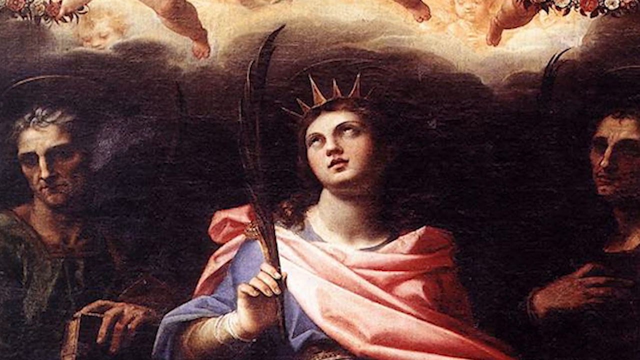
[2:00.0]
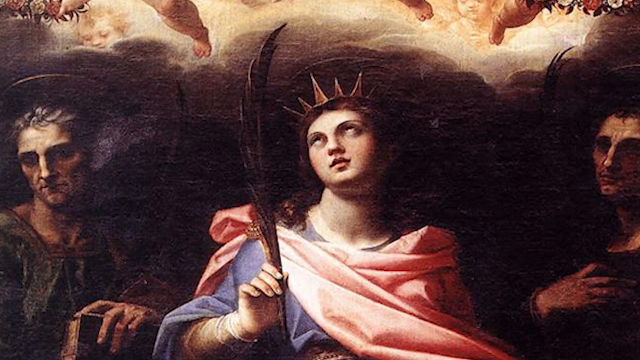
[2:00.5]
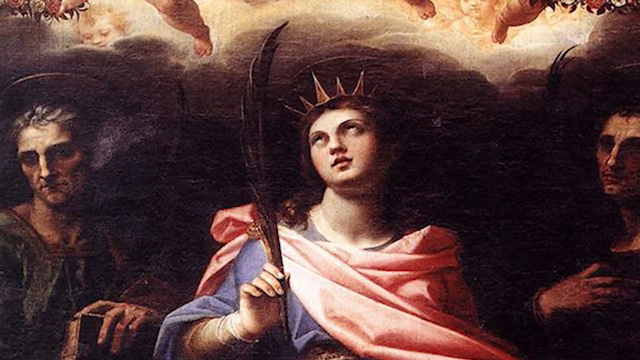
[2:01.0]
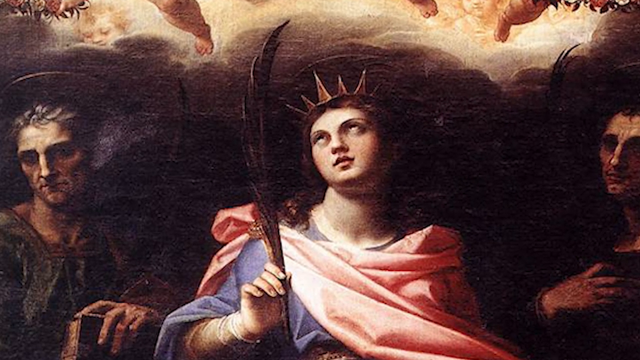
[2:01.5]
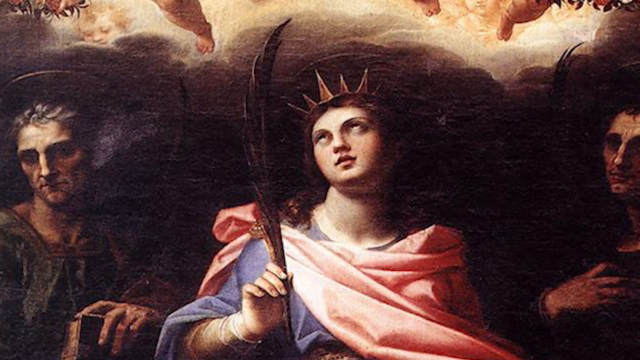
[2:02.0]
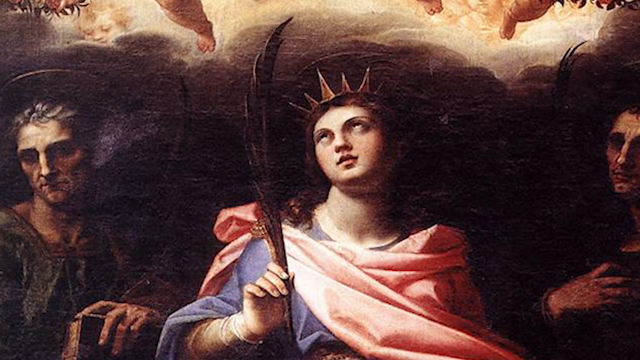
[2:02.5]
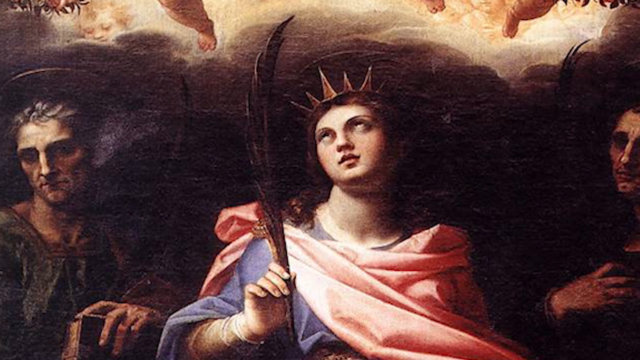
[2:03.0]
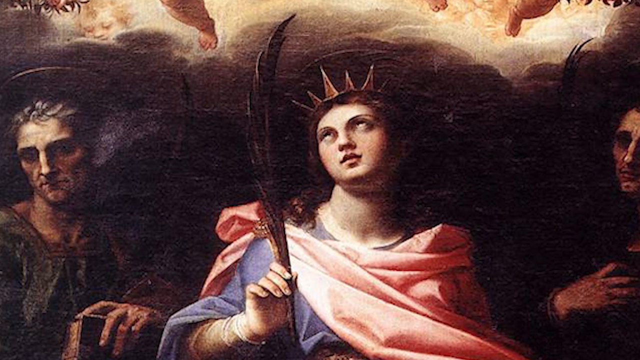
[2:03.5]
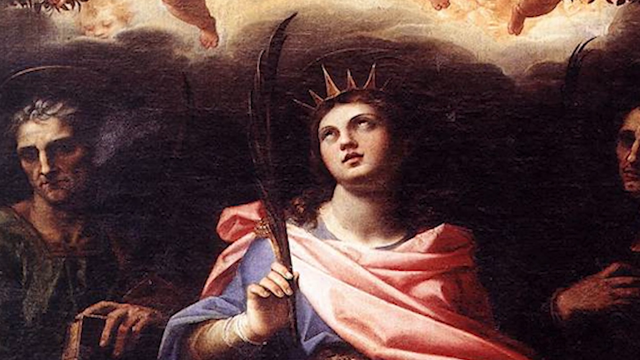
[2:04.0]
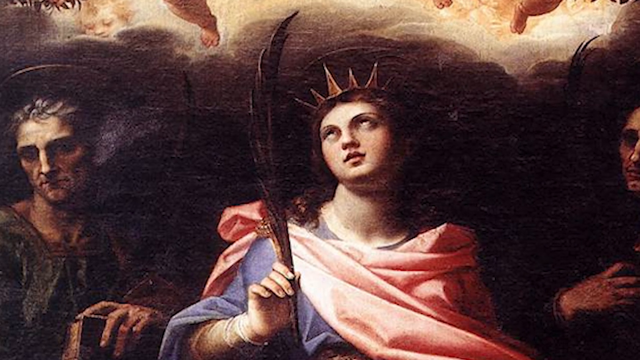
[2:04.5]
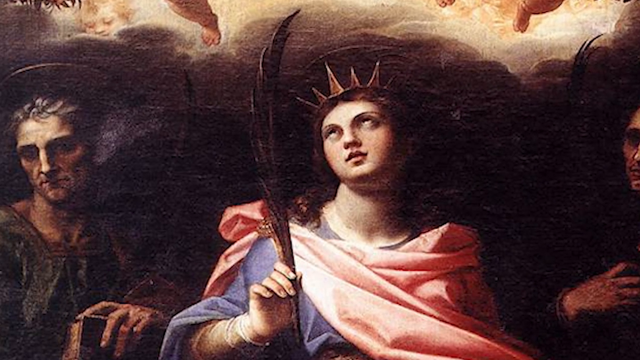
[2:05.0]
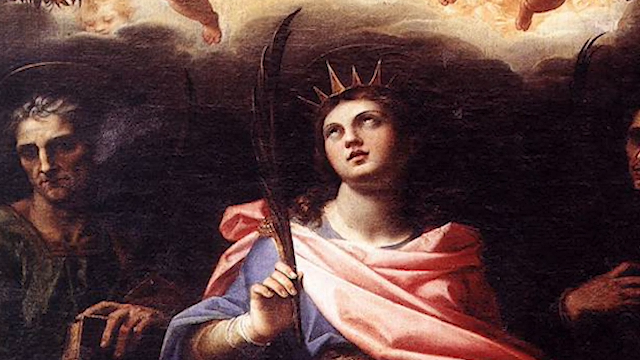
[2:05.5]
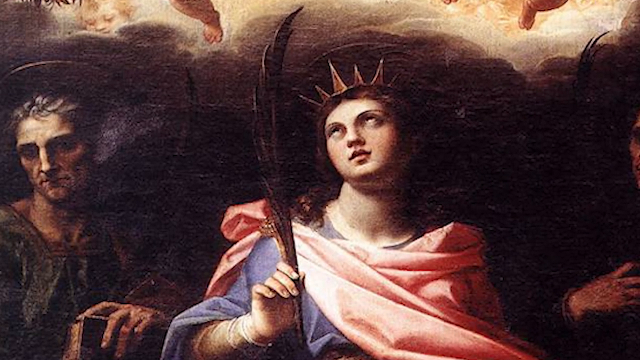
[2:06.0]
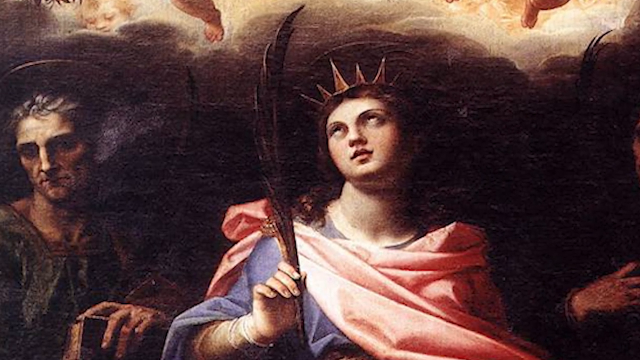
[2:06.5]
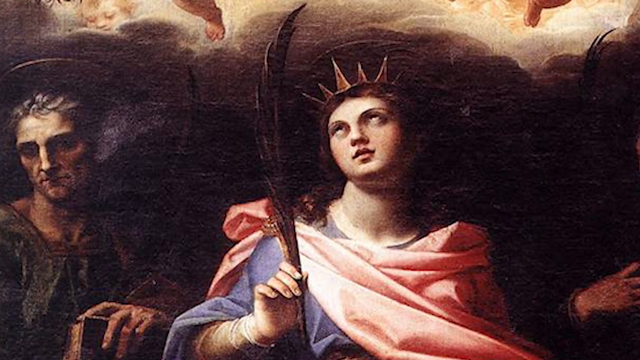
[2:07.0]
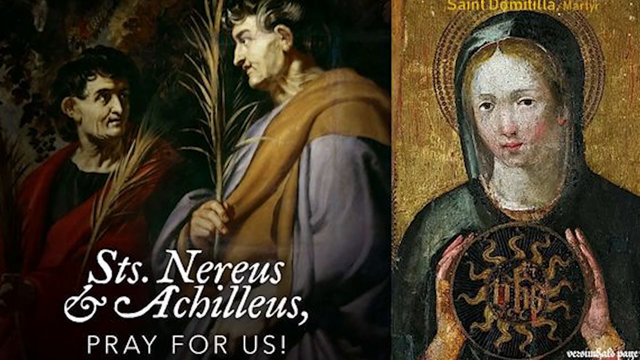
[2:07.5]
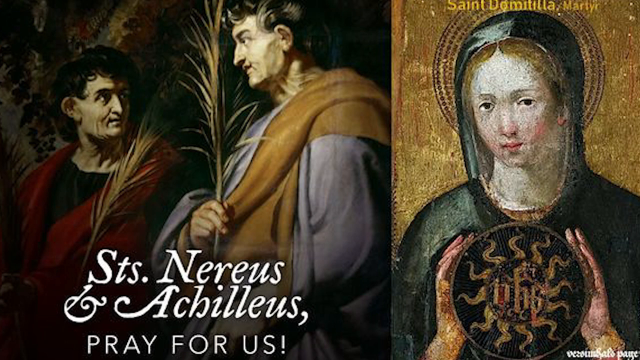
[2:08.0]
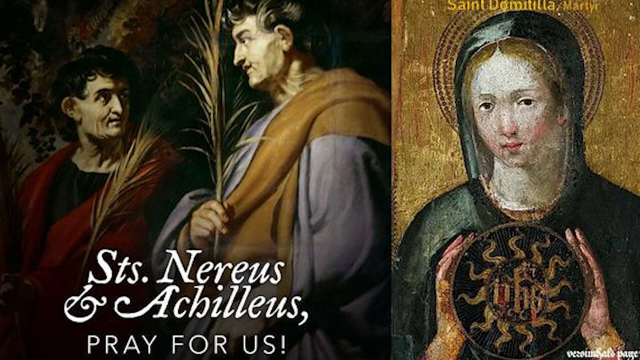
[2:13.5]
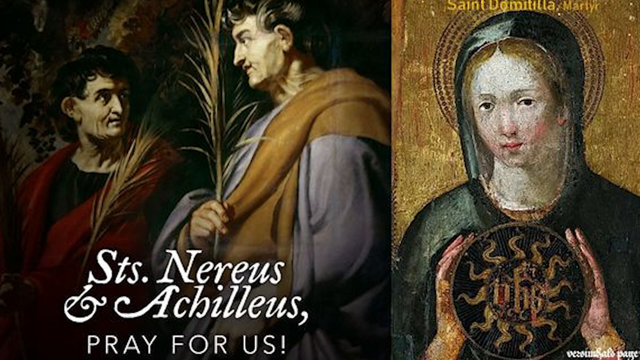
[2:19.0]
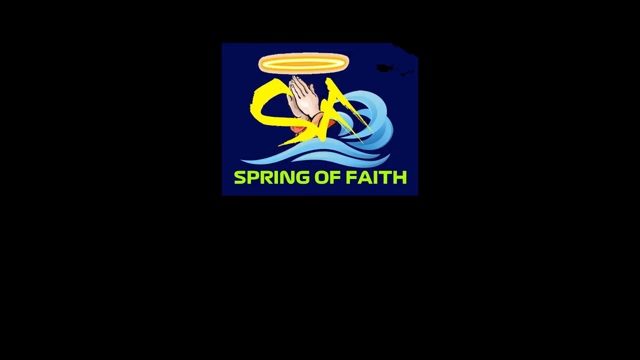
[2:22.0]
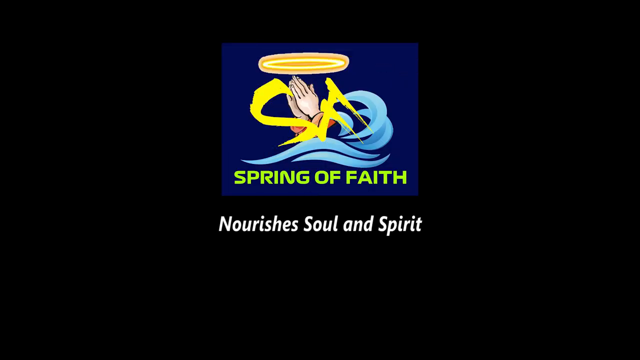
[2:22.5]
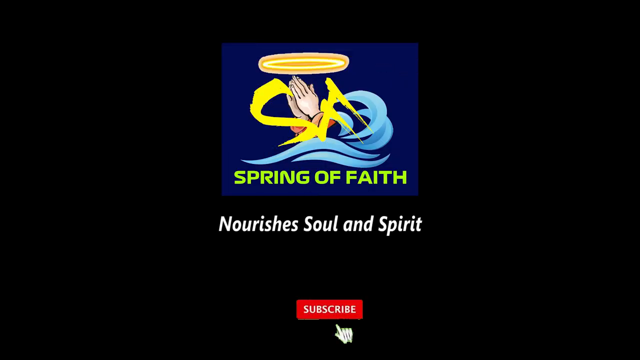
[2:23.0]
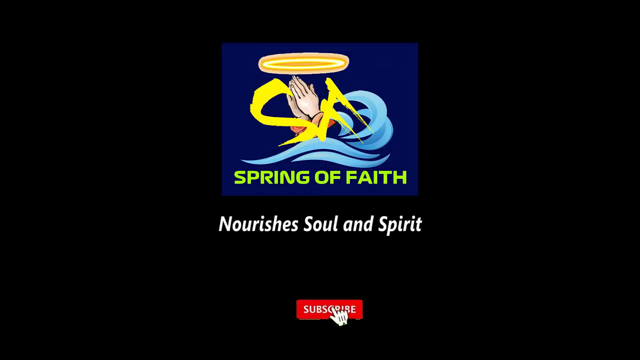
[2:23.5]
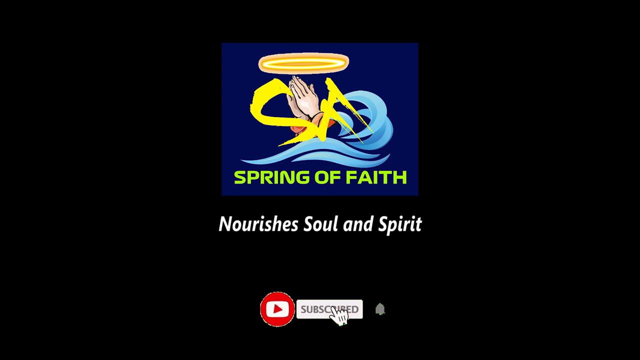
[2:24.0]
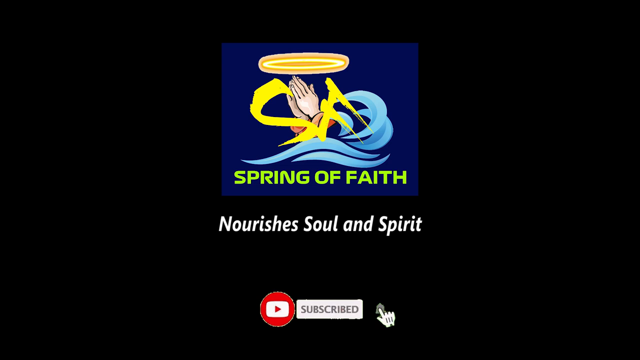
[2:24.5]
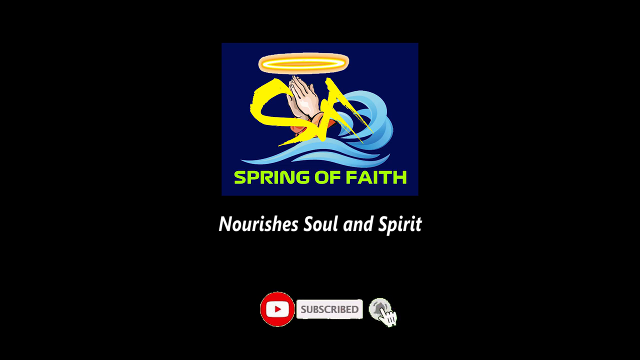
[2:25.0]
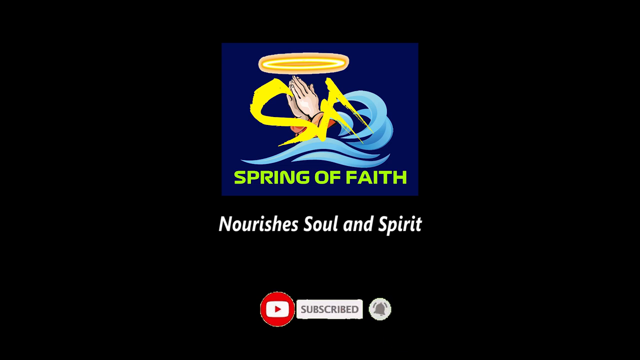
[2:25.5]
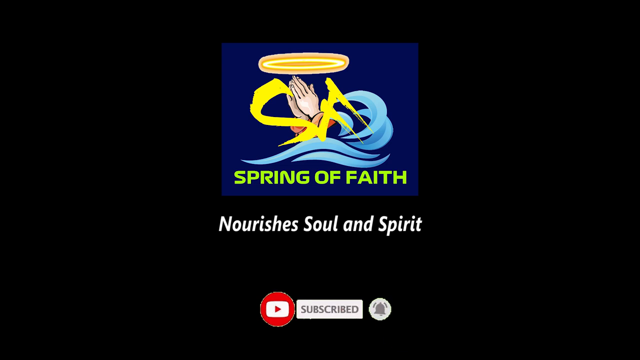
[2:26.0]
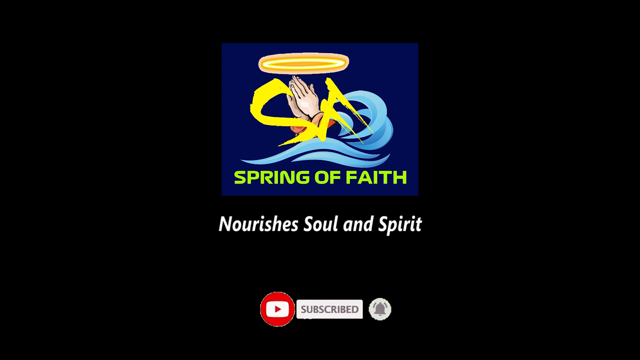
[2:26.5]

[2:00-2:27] More images follow. The first shows a woman who is either looking upwards or has her eyes rolled back. She wears a gold spiky crown and blue and pink, and holds a long feather- or plant-like object. On either side of her are two men looking downwards, and above her are the feet of what are potentially angels; the painting is generally quite dark. The next screen shows two images side by side: on one side, two men looking at each other and holding plants, with "Saints Neurus and Achilles" written underneath them; on the other side, a painting of a woman wearing a black hood. The video ends by showing the YouTube channel name once more, "Spring of Faith Nourishes Soul and Spirit".